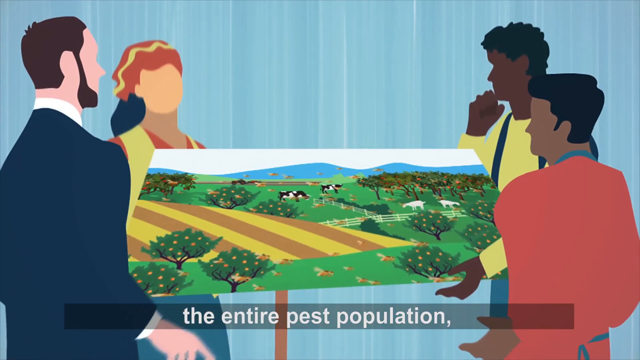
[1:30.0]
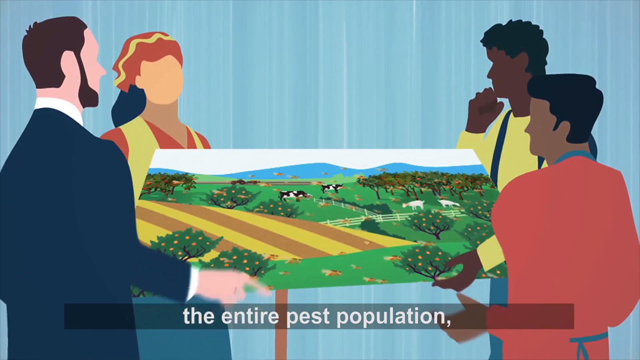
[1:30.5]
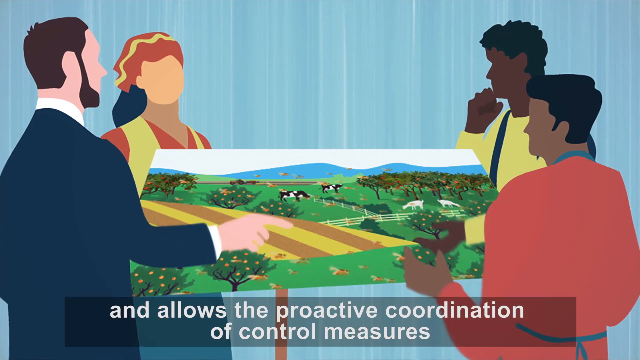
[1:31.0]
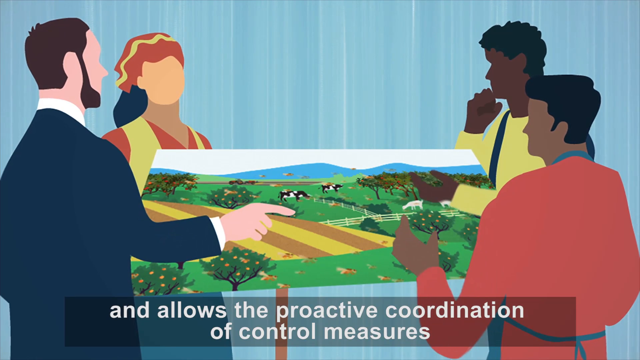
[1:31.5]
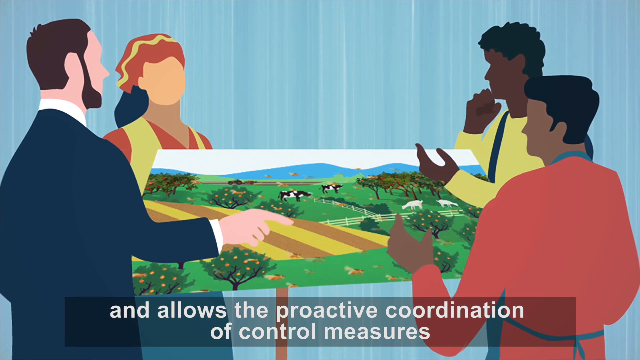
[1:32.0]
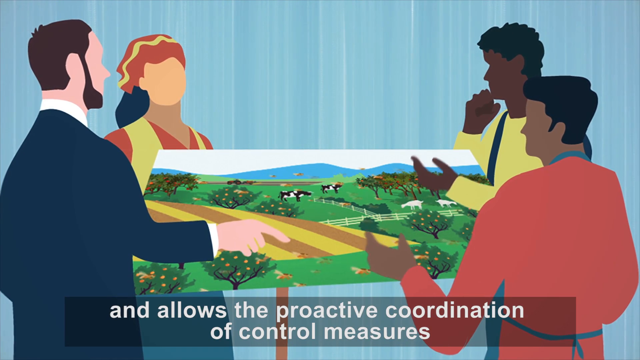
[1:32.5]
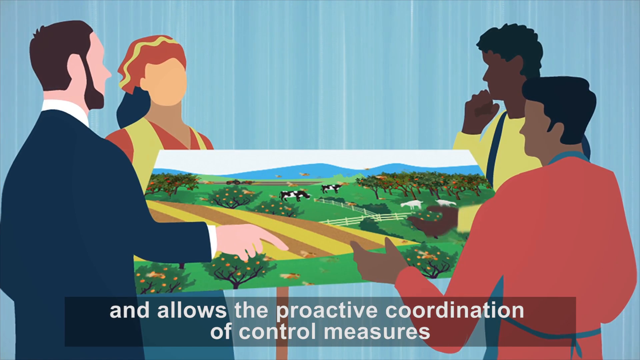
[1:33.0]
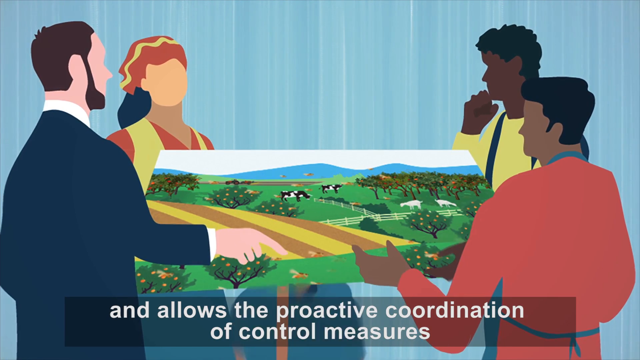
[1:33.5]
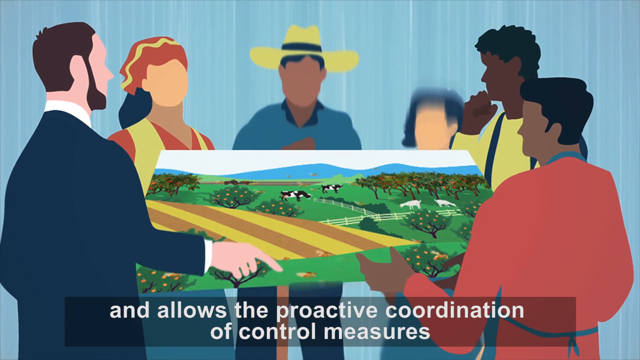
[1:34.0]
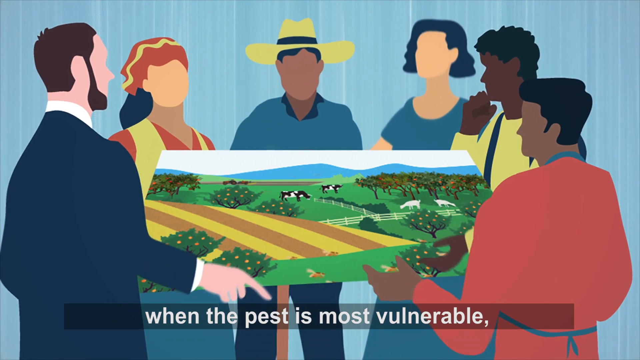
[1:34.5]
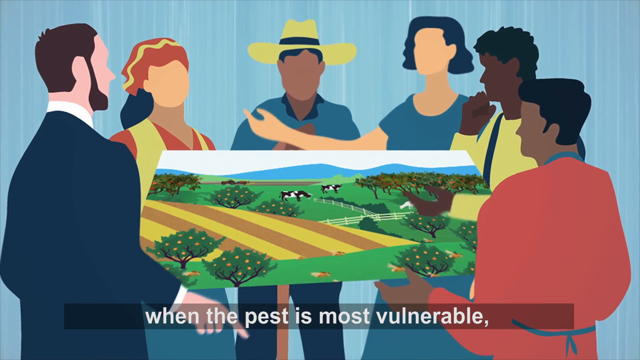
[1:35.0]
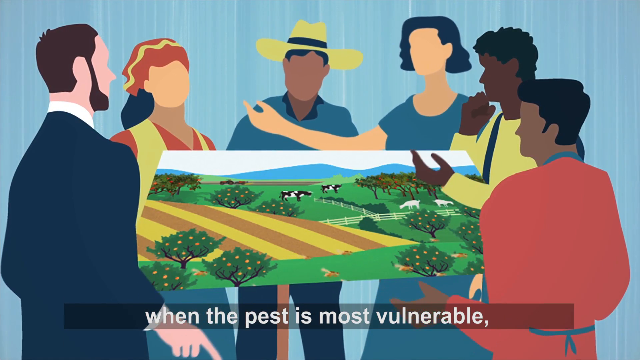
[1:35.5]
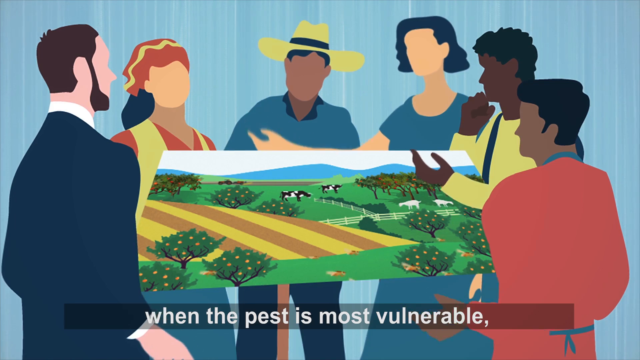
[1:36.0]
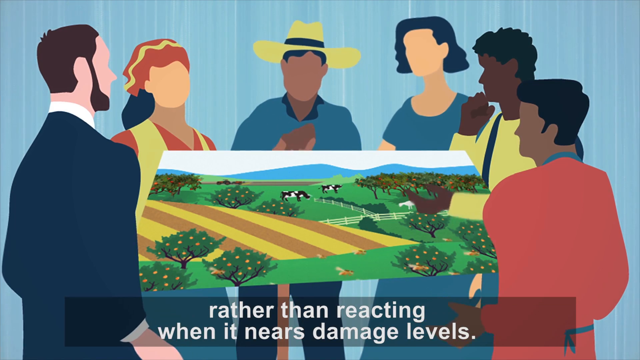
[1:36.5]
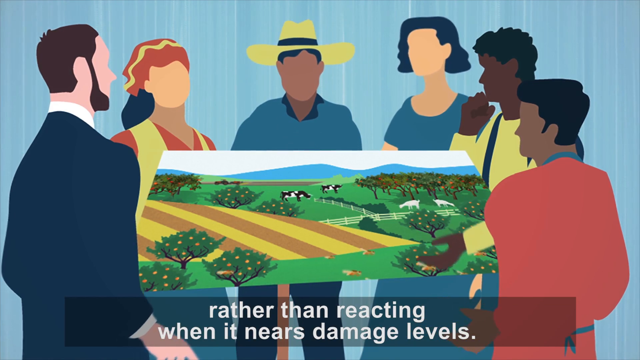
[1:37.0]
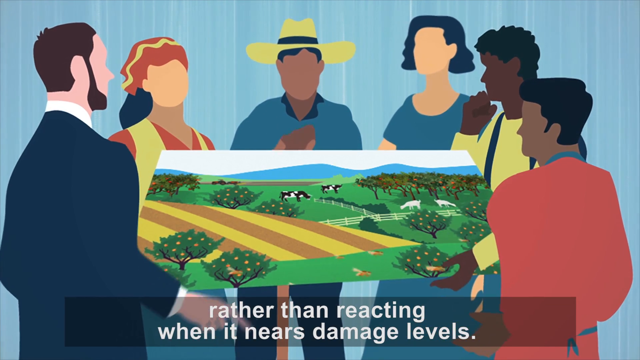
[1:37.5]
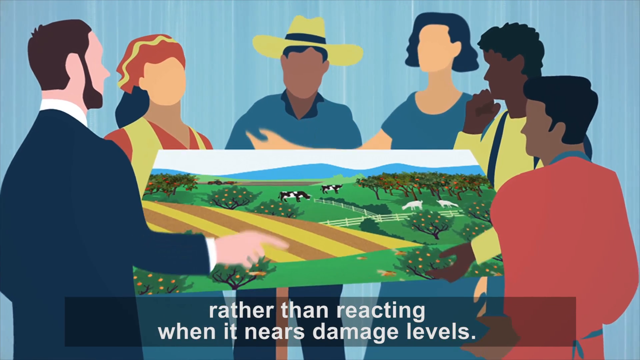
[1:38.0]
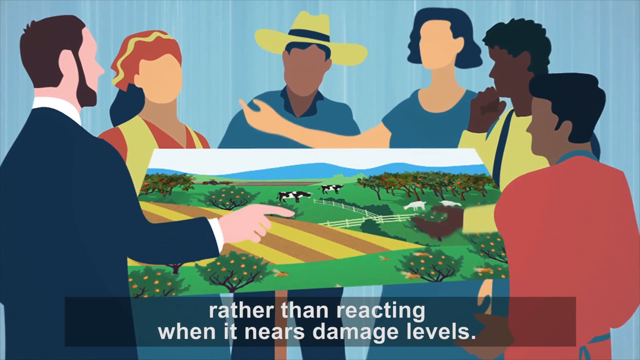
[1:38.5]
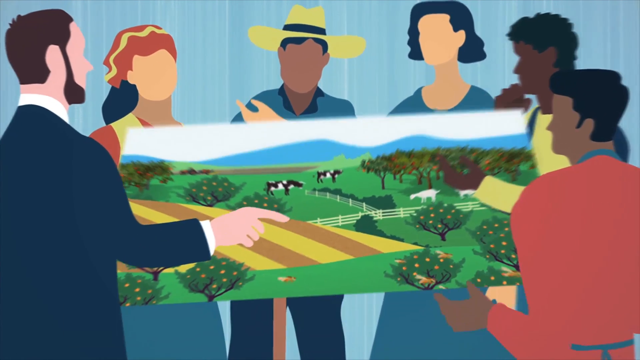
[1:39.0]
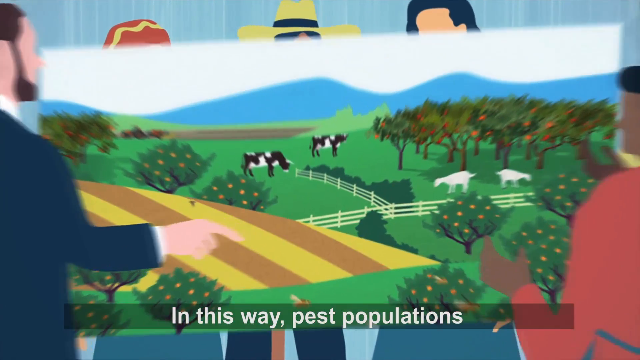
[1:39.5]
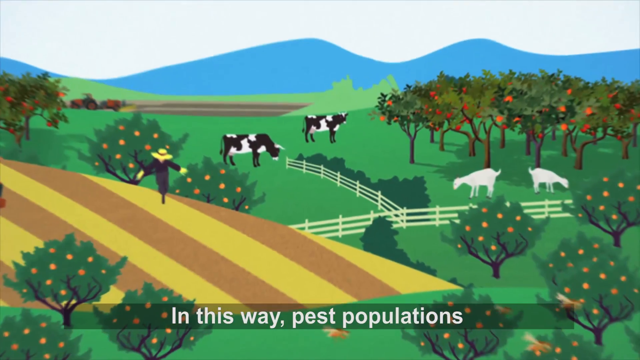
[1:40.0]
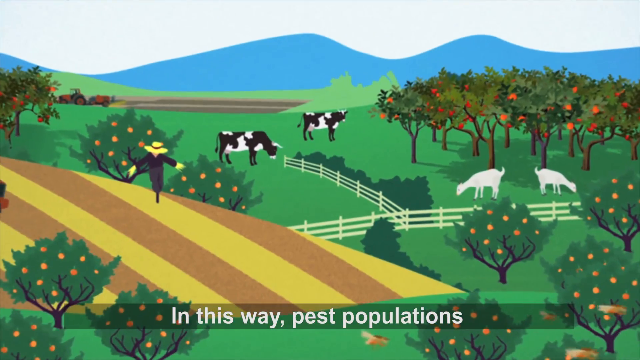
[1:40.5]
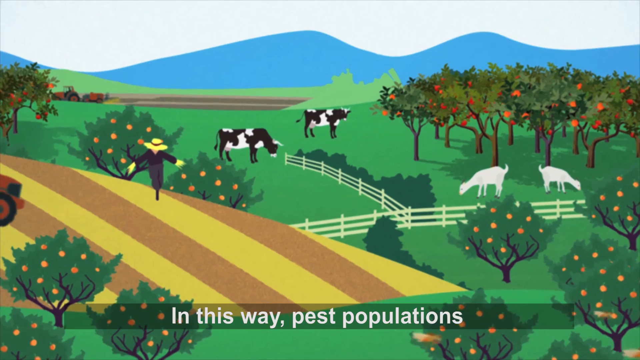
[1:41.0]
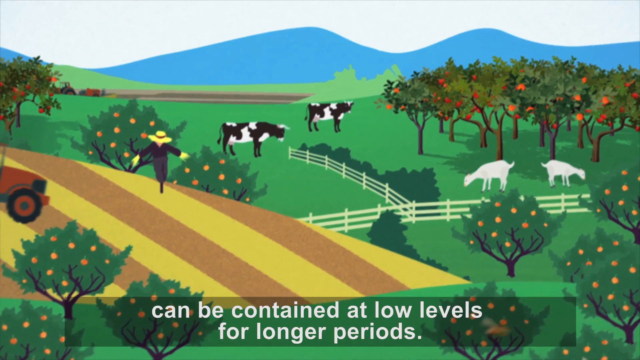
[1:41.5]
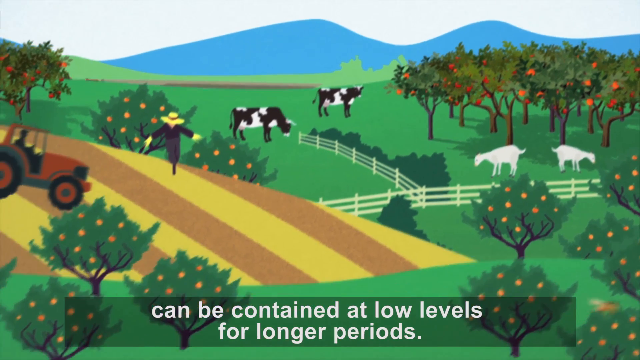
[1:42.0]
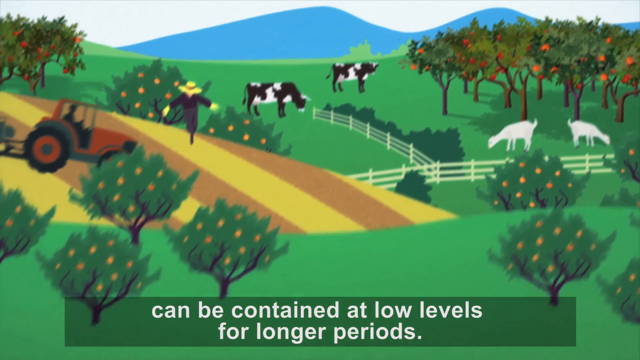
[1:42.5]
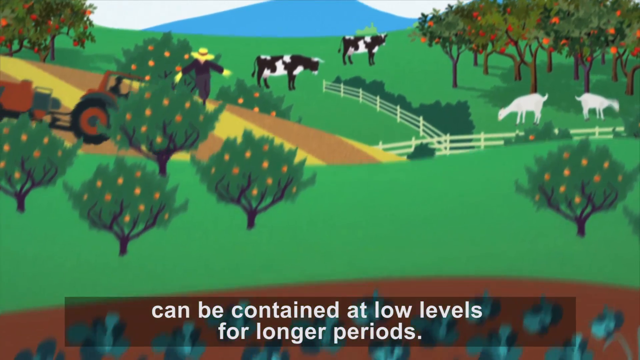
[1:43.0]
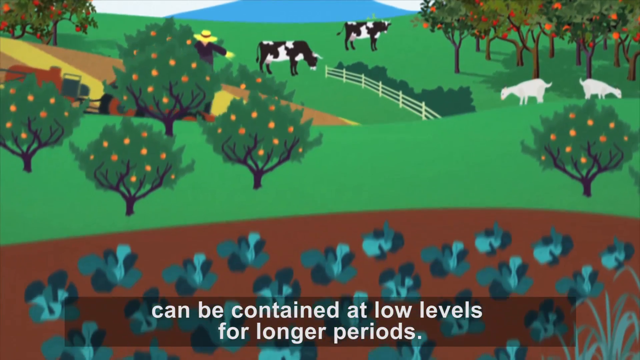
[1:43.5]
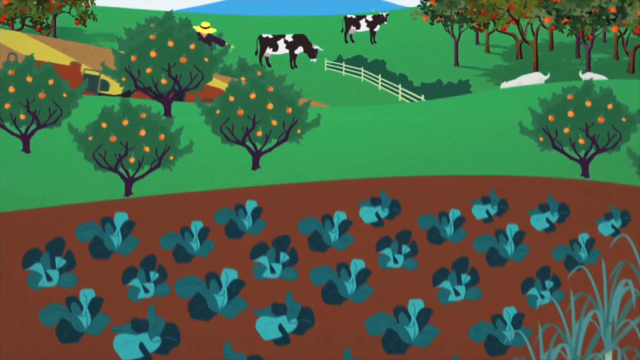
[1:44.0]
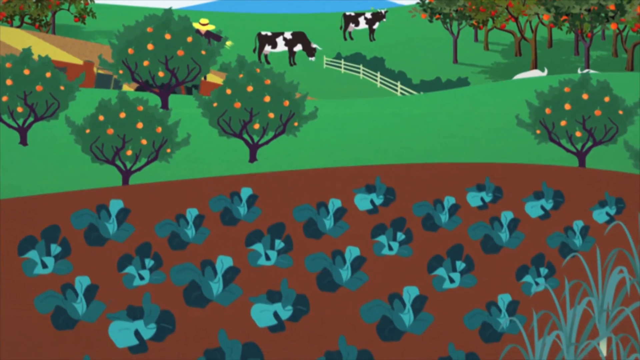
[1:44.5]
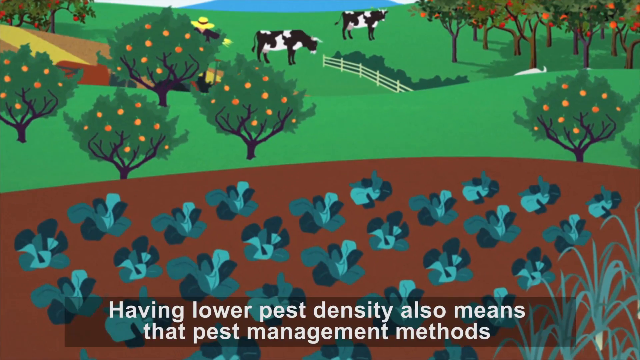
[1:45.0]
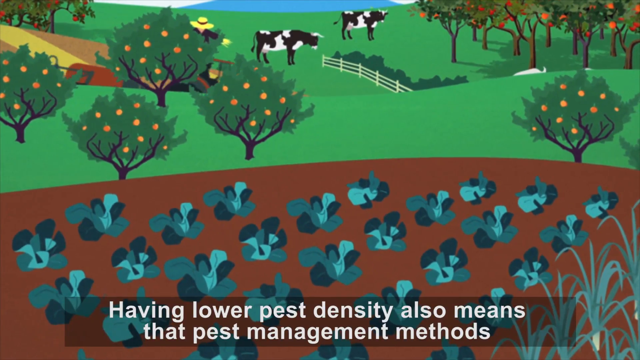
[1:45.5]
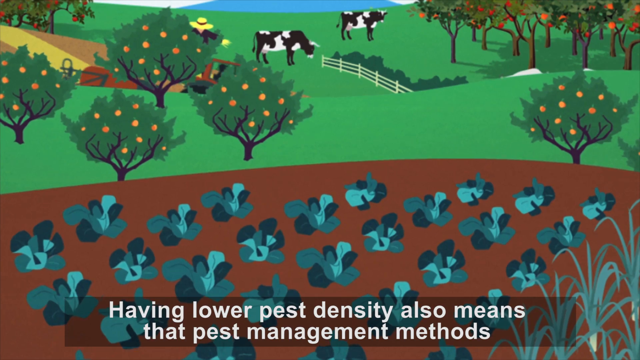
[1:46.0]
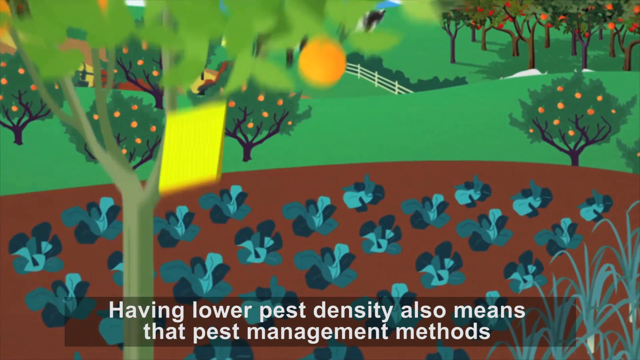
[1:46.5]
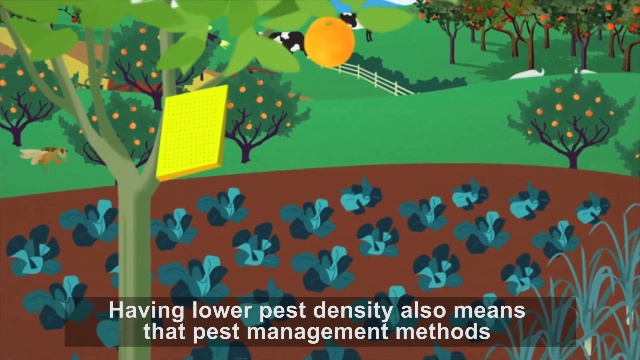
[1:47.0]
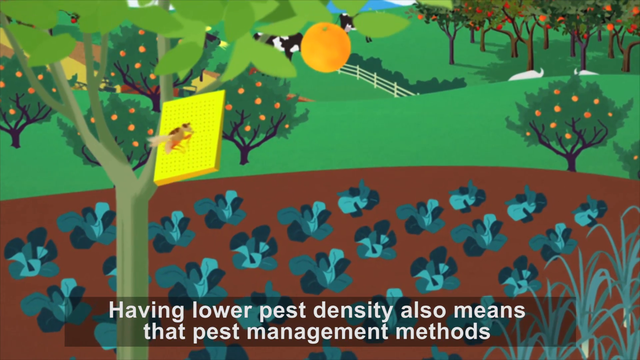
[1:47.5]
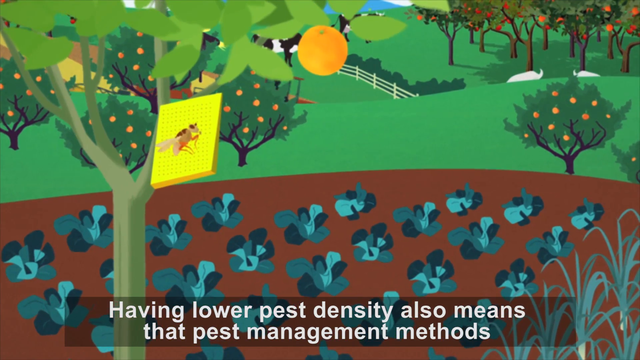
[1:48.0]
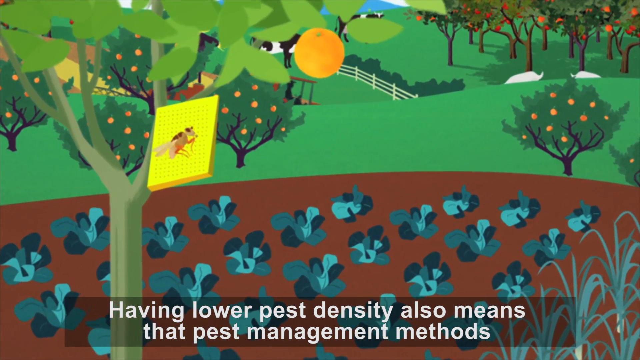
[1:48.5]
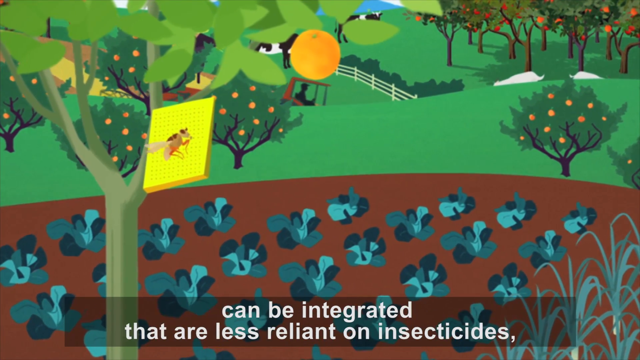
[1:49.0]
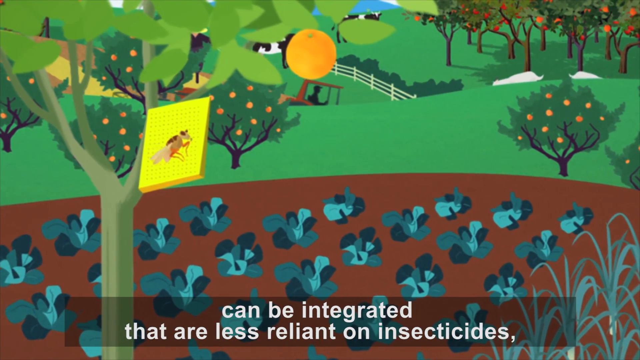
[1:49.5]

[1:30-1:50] The group, the bearded man in the suit, the woman in the background with the band in her hair and the two men on the right, survey the healthy-looking farm scene with plowed fields, a tractor in the background, fruit trees, goats, cows and bugs, and they appear to be discussing it. Two more people arrive, a man with a wide-brimmed hat and a woman with dark hair and a blue skirt, and they are seemingly discussing further with the man in the suit. The view returns to the healthy scene and pans in a little more to the foreground. Two cows, two goats and a lot of fruit trees are still visible in the background, and now vegetables grow in the ground, looking like cabbage from their leaves. Another fruit tree springs up from there, bearing a single orange. A yellow sheet of some kind looks like it is hanging from the fruit tree, and there is a mosquito, which seems to be hovering rather than stuck to the sheet; it is not entirely clear whether the sheet is some kind of fly or bug trap.